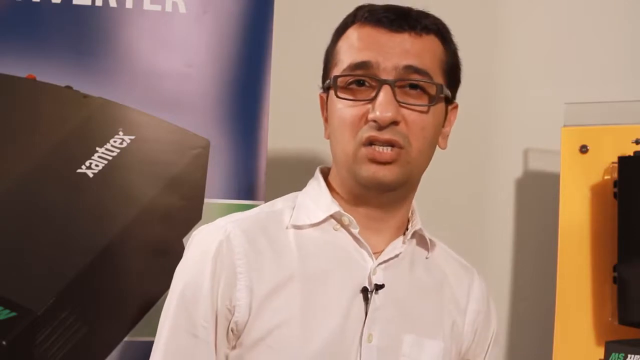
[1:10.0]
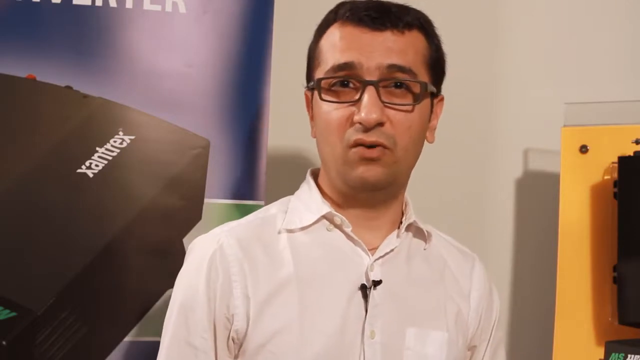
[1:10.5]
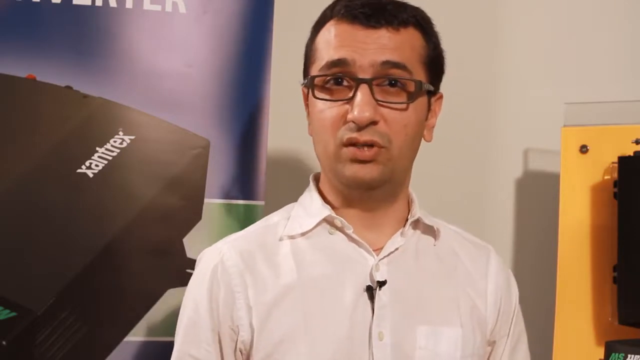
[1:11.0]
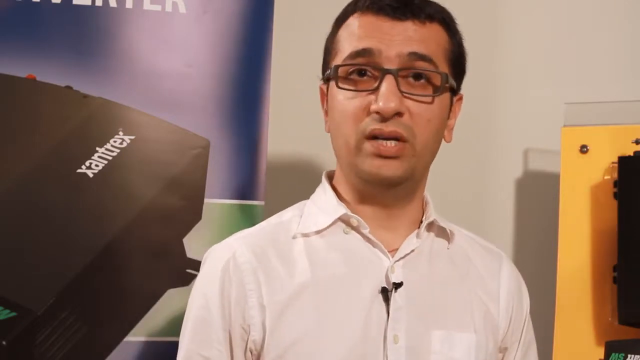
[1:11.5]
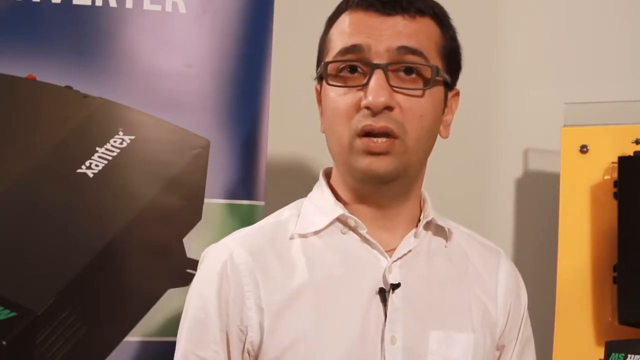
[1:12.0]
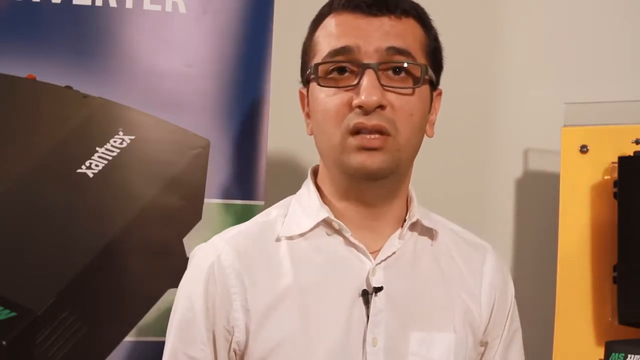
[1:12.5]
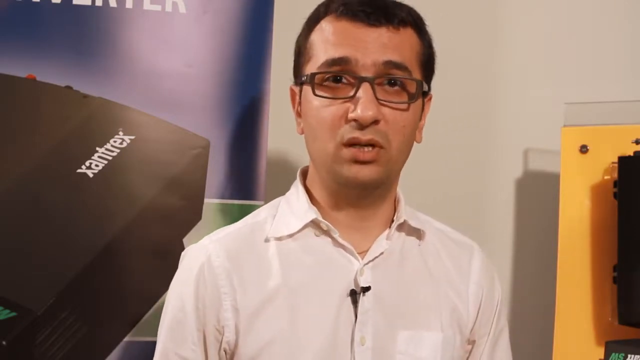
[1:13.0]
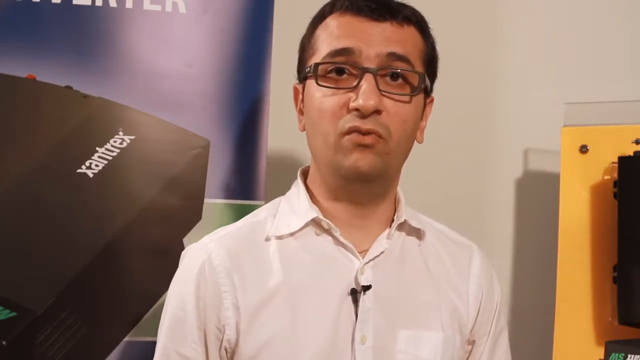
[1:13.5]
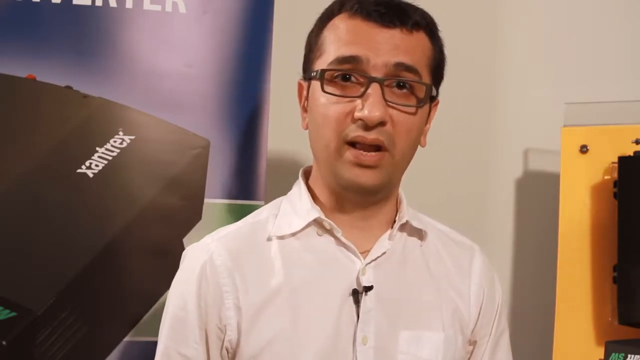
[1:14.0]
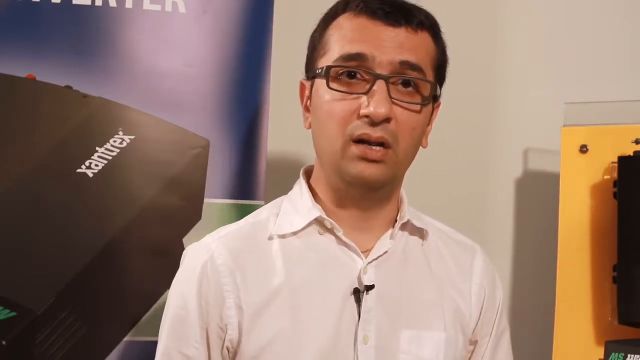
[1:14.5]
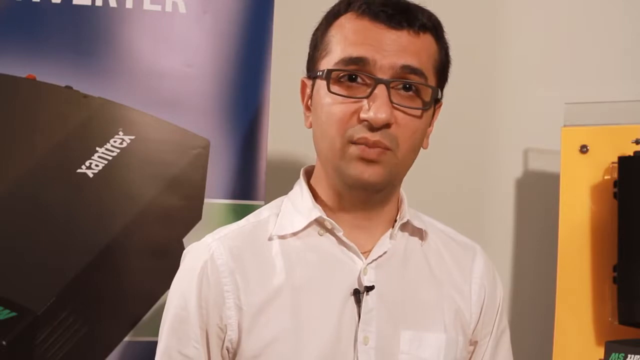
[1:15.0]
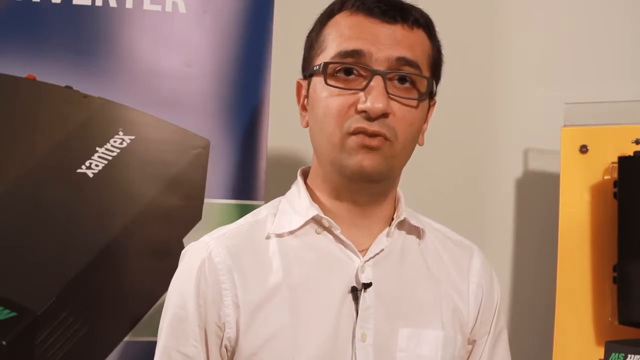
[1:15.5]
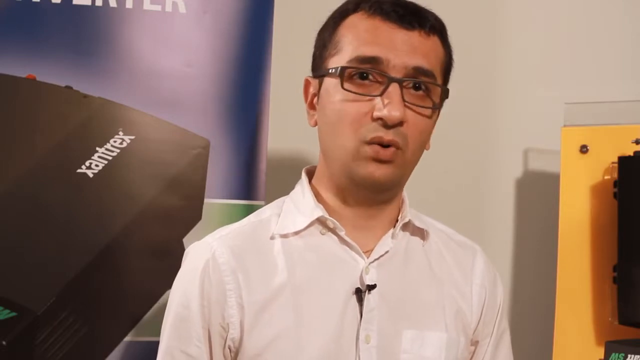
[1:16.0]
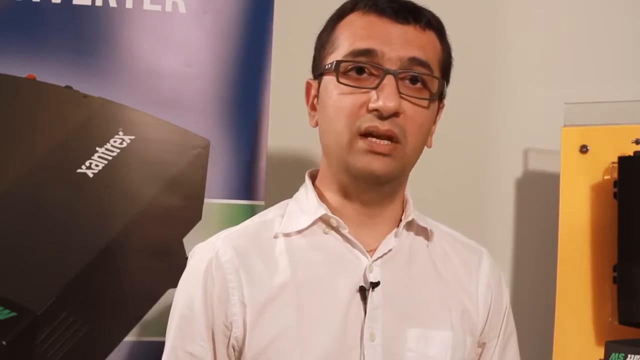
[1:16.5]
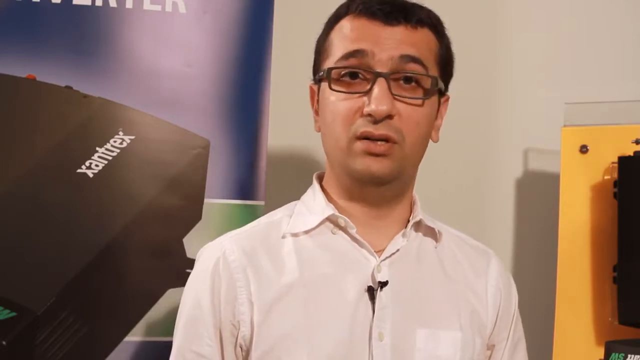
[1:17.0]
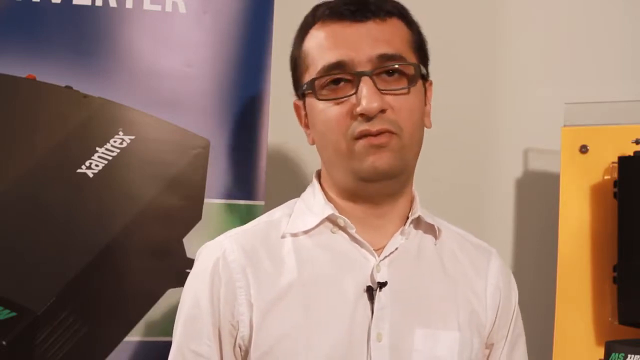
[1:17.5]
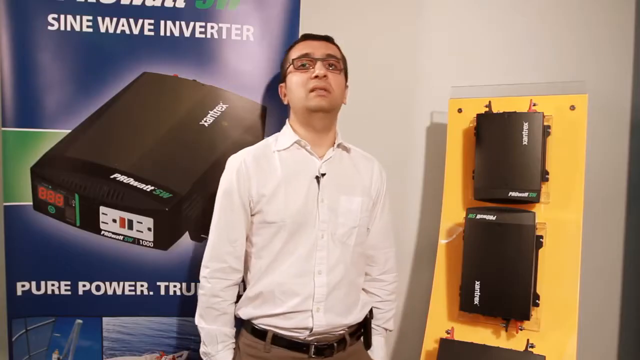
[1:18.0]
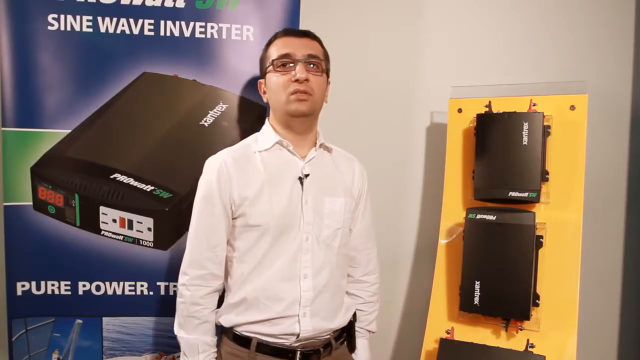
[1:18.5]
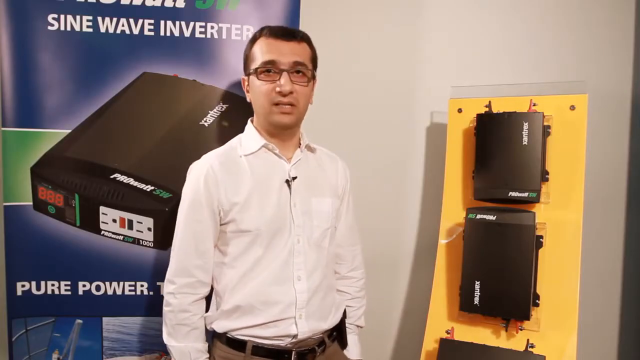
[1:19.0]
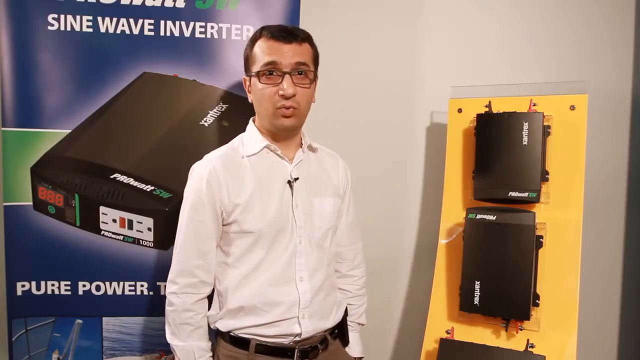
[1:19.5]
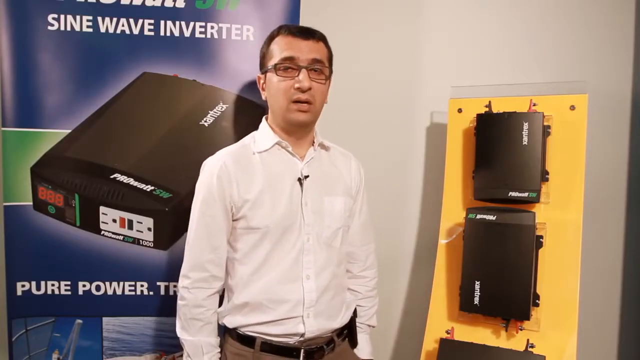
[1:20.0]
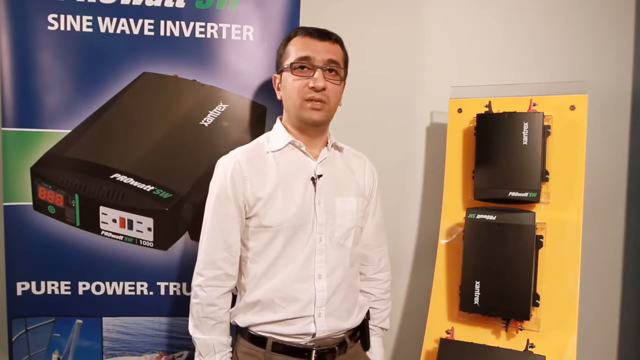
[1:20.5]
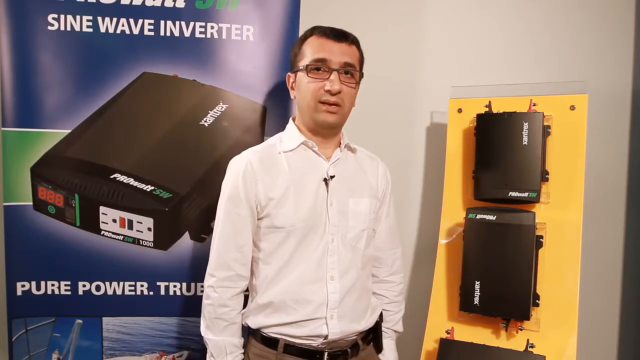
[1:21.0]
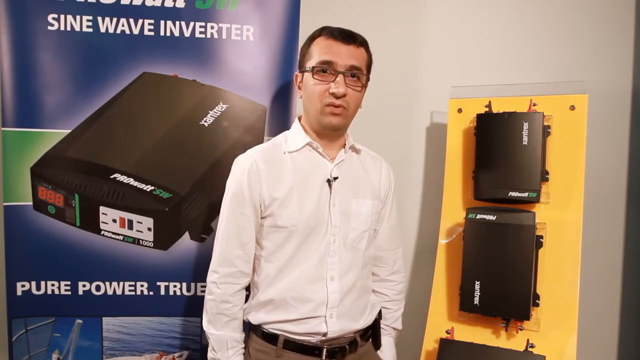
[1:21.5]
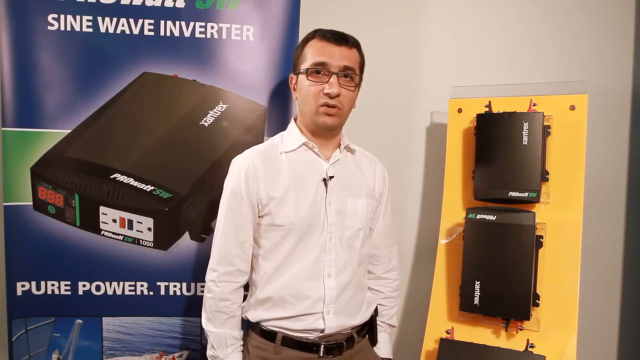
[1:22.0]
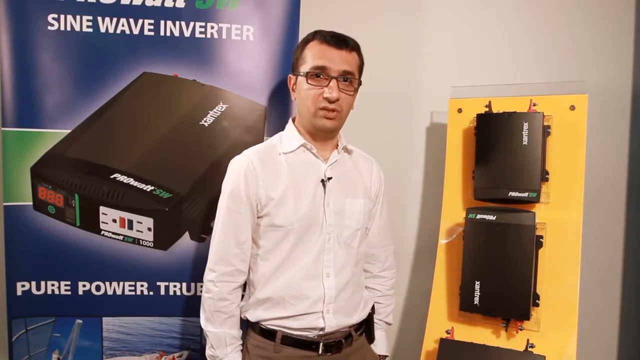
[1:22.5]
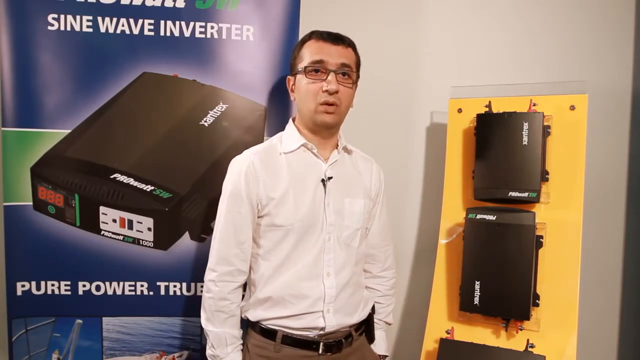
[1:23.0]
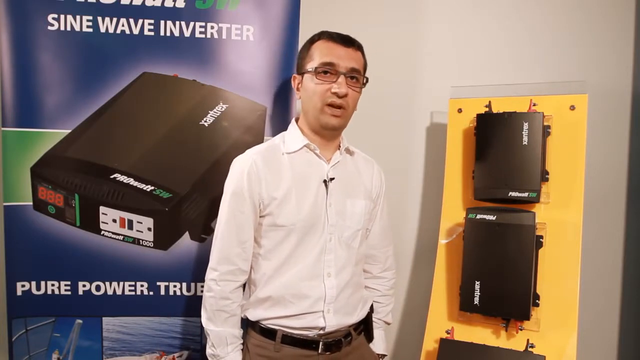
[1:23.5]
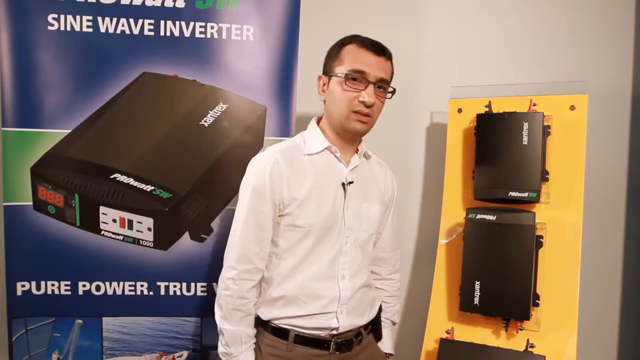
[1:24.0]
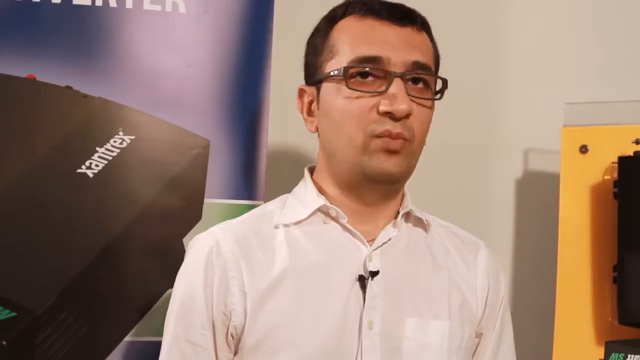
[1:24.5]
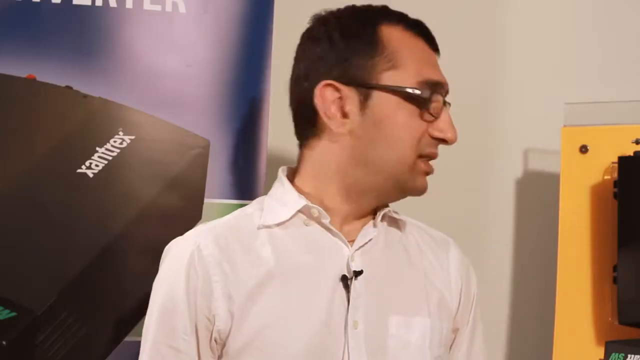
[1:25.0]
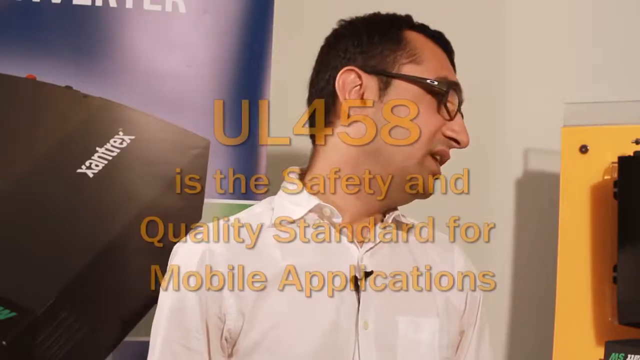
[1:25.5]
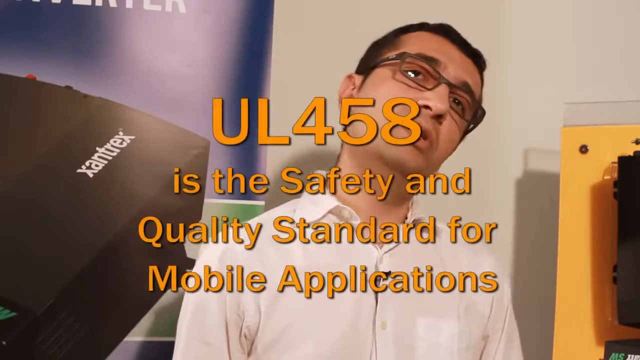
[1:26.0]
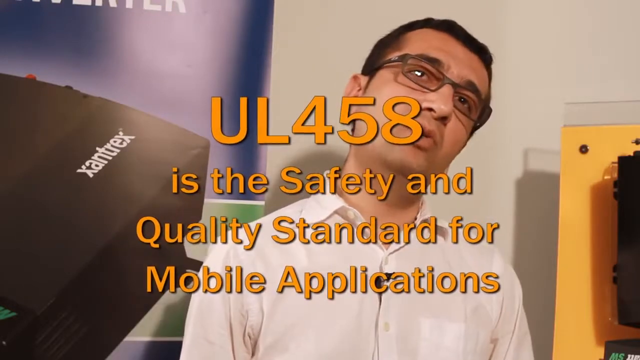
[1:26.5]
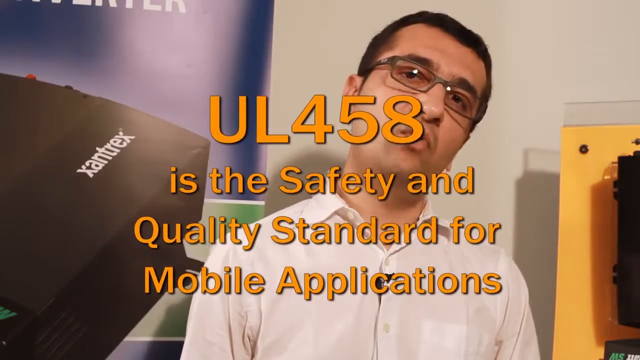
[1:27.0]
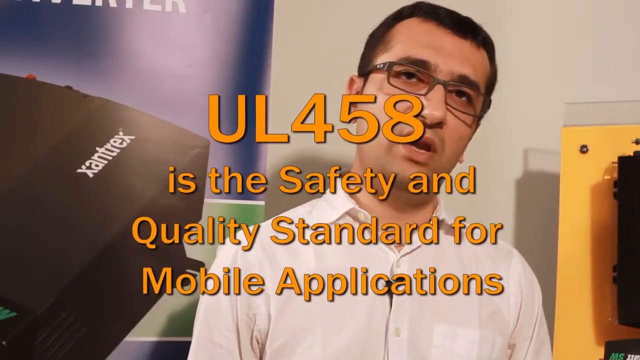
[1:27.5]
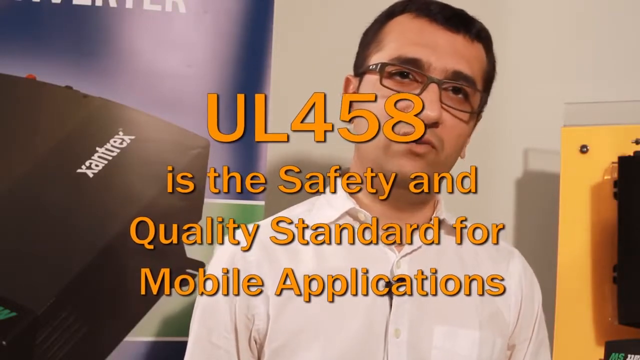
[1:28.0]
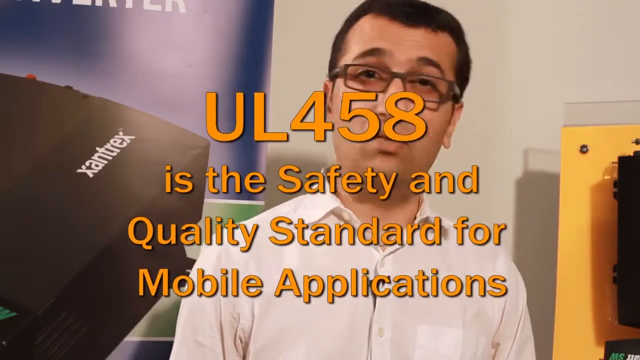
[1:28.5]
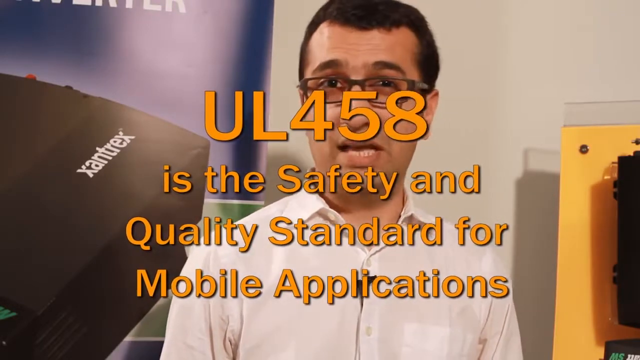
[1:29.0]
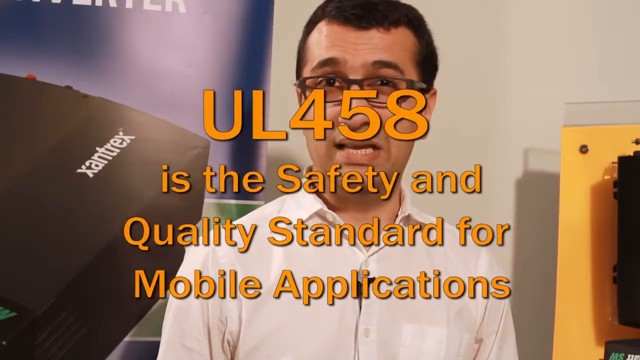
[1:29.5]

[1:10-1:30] The man has light brown skin, rectangular glasses and black hair, and wears a button-up shirt with a microphone attached. He stands in front of a poster on the left, with a yellow board holding some of the wave inverters on the right, and talks directly to the camera. The camera zooms back to show him from the waist up, revealing two devices attached to the yellow board, both black. The poster behind him reads "sine wave inverter pure power," and the device reads "pro watt sw" and has two three-pronged plug openings on the right. A close-up then shows just the man's chest, overlaid with orange text: "UL 458 is the safety and quality standard for mobile applications."